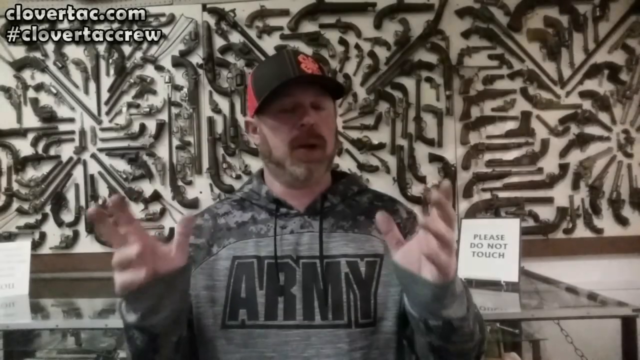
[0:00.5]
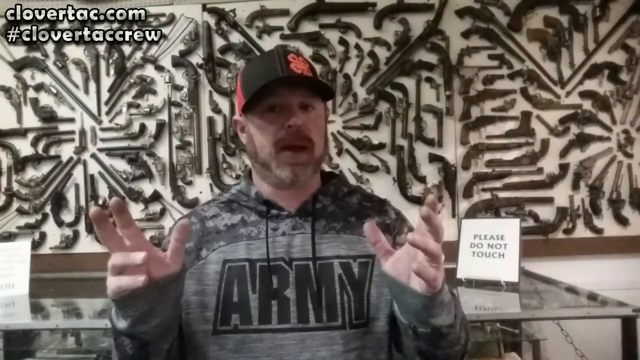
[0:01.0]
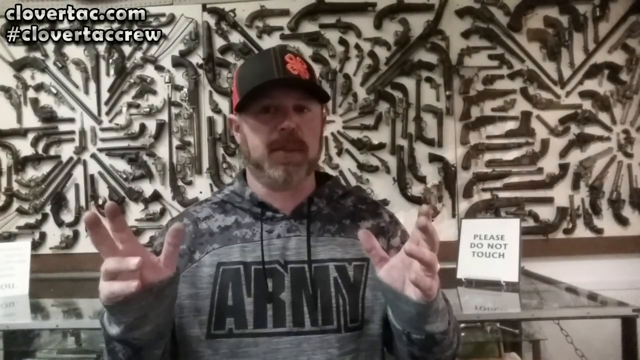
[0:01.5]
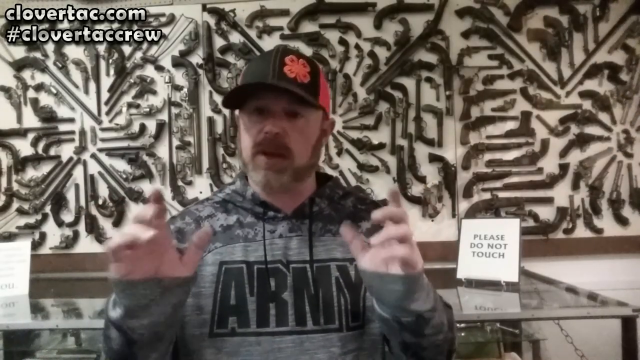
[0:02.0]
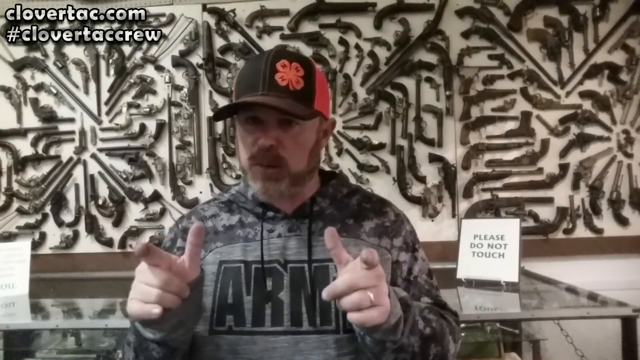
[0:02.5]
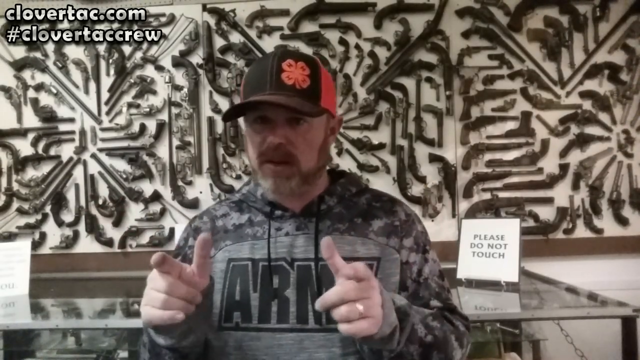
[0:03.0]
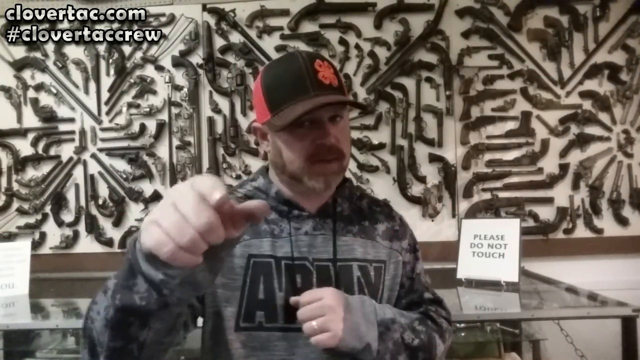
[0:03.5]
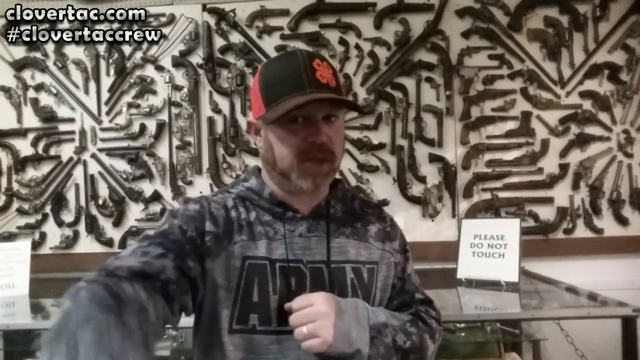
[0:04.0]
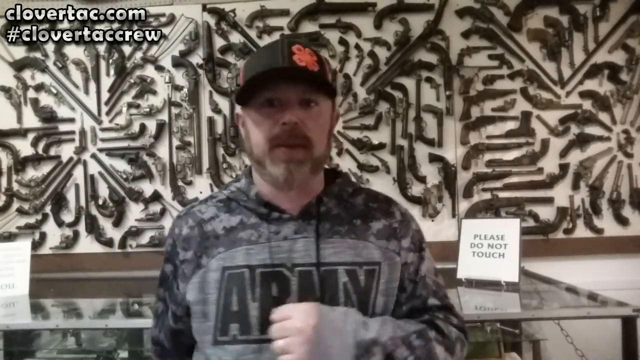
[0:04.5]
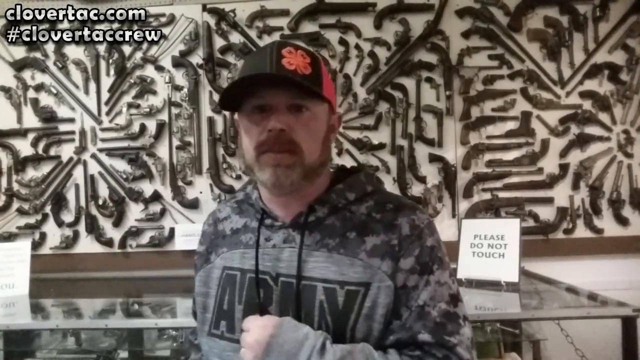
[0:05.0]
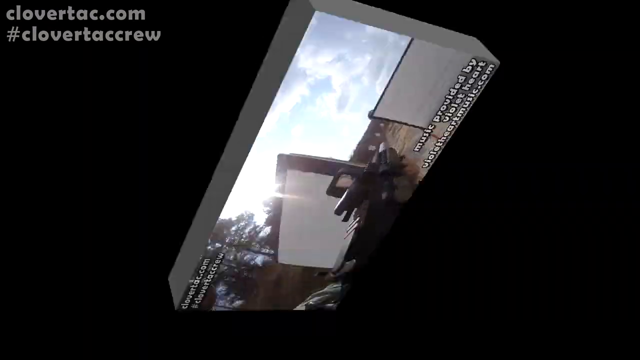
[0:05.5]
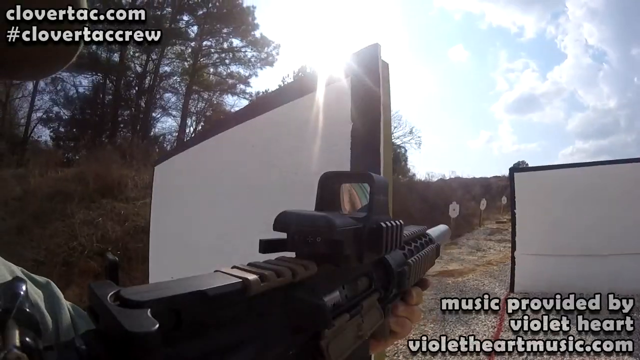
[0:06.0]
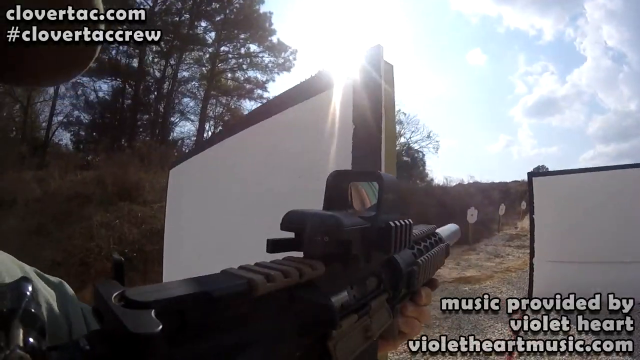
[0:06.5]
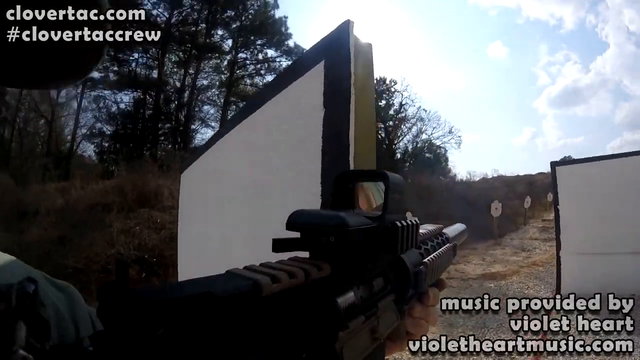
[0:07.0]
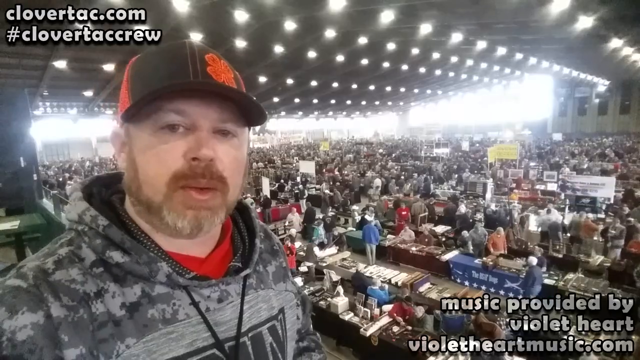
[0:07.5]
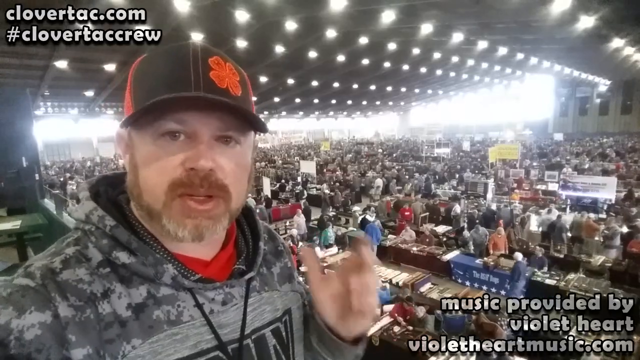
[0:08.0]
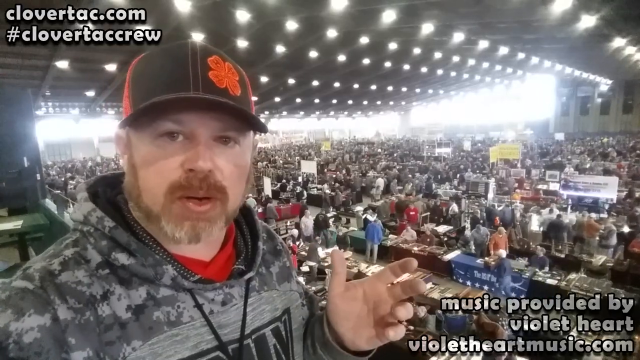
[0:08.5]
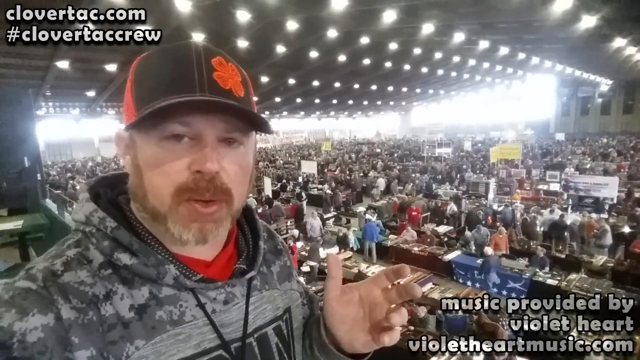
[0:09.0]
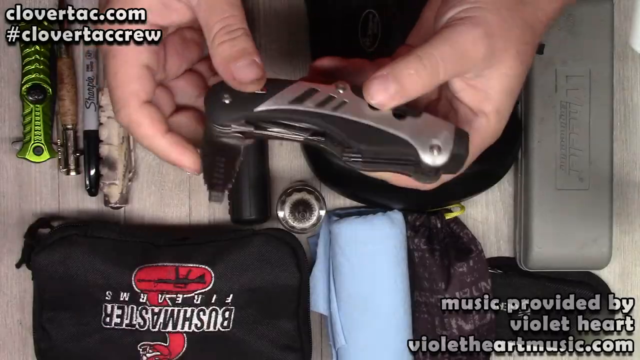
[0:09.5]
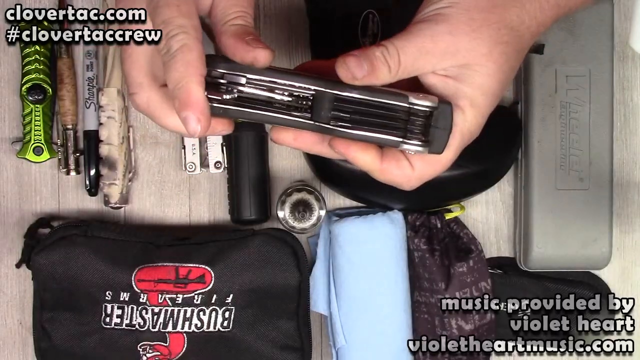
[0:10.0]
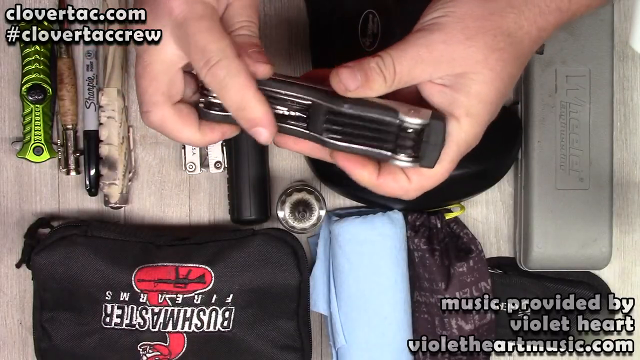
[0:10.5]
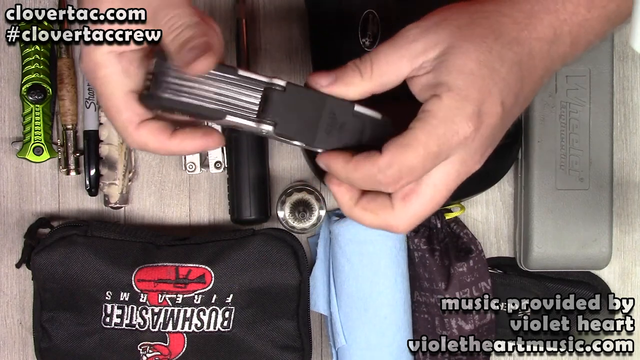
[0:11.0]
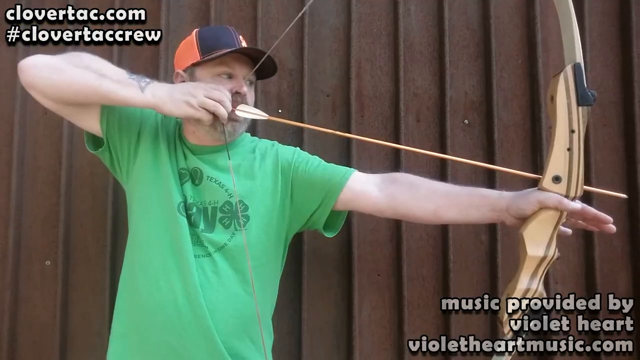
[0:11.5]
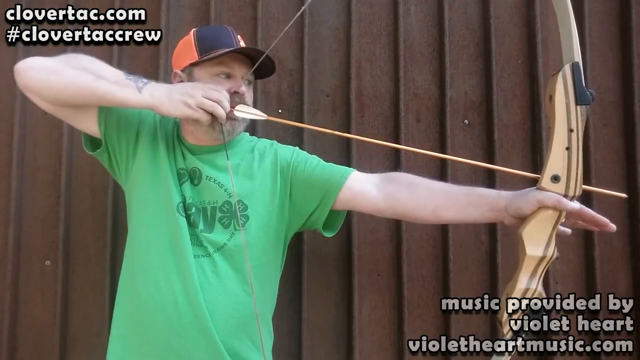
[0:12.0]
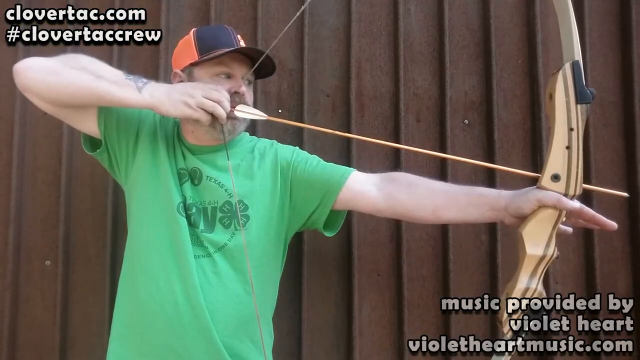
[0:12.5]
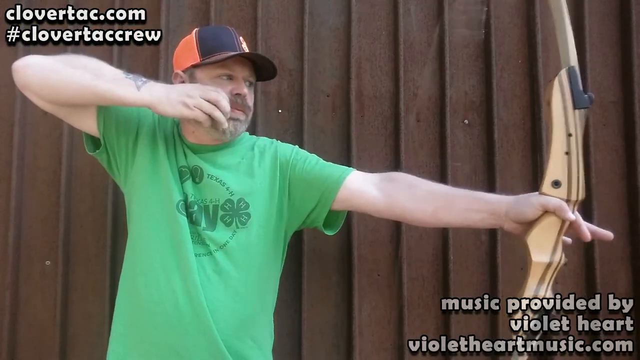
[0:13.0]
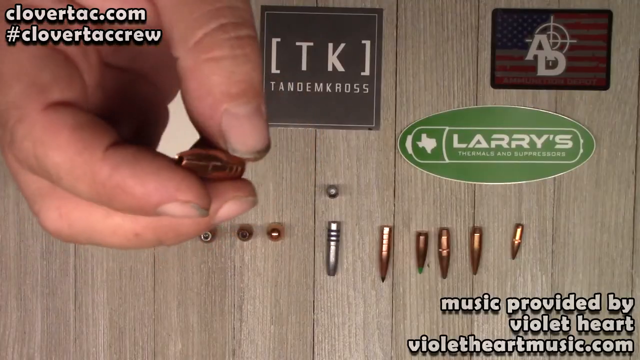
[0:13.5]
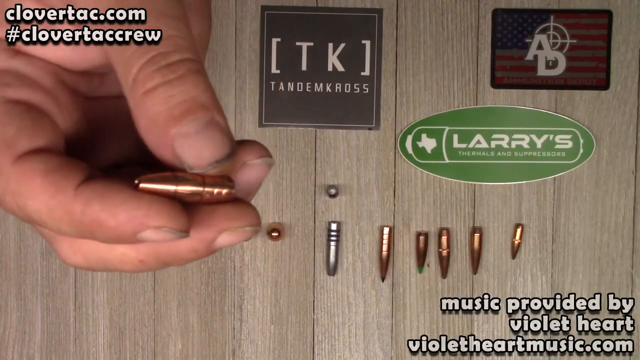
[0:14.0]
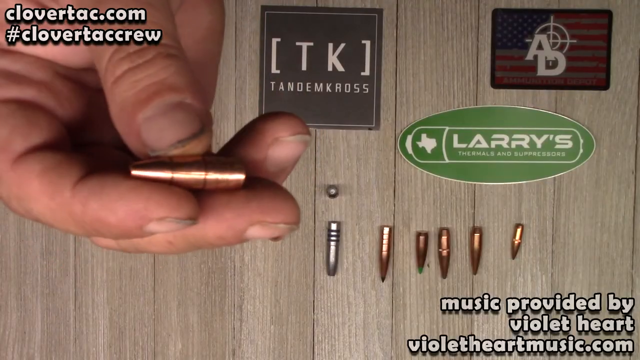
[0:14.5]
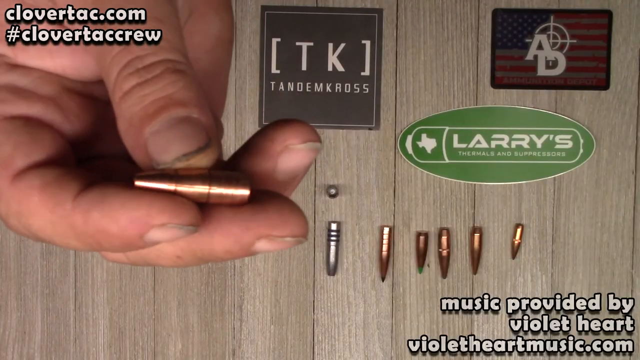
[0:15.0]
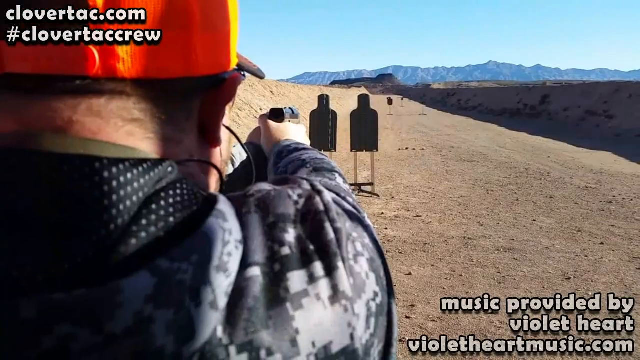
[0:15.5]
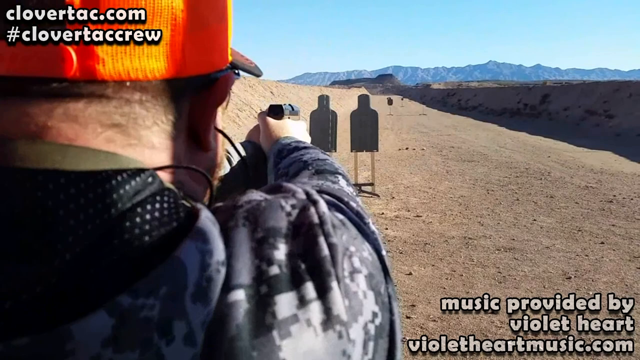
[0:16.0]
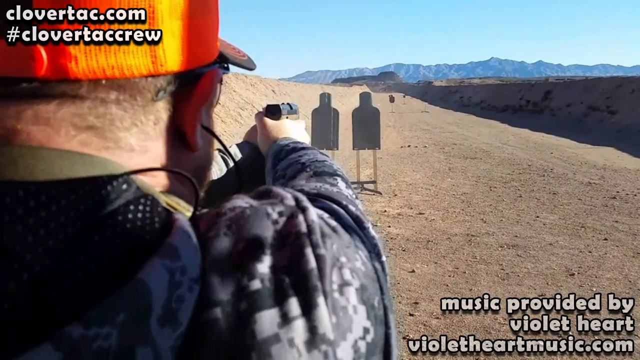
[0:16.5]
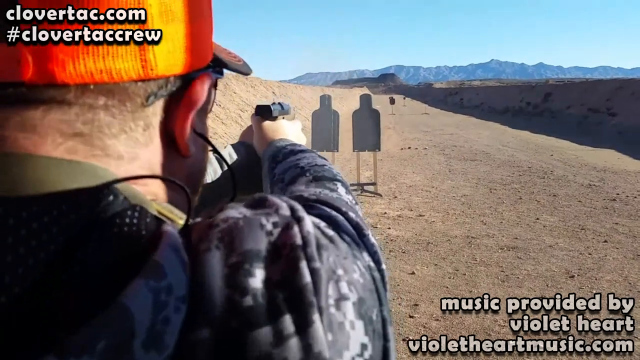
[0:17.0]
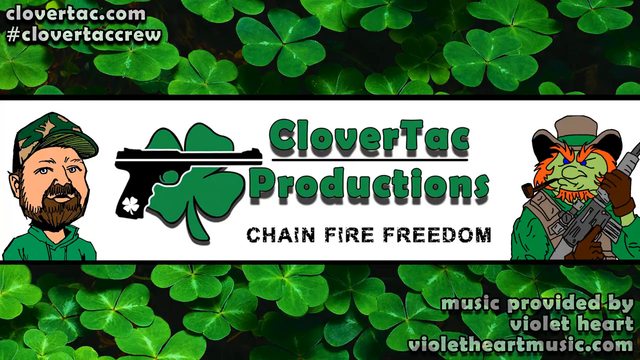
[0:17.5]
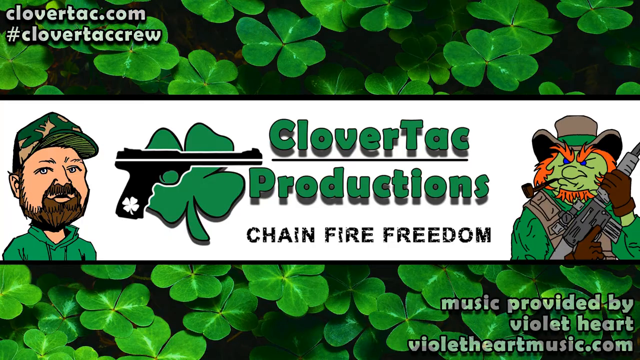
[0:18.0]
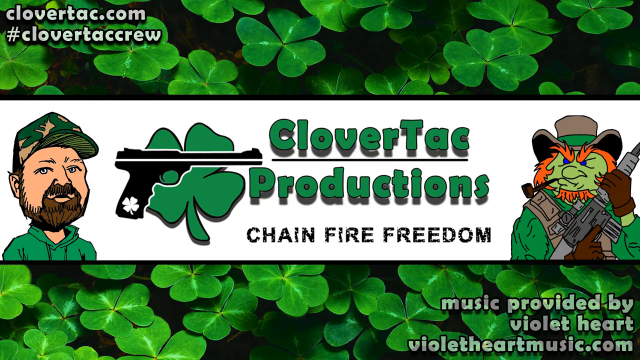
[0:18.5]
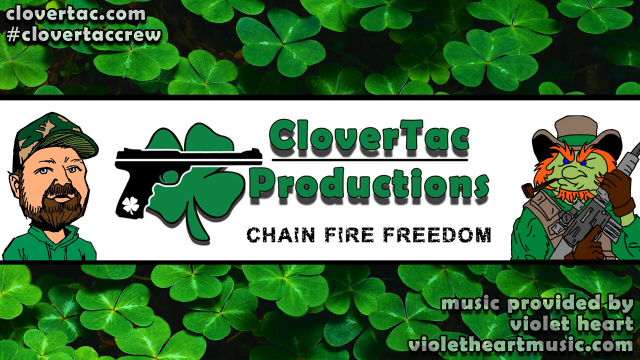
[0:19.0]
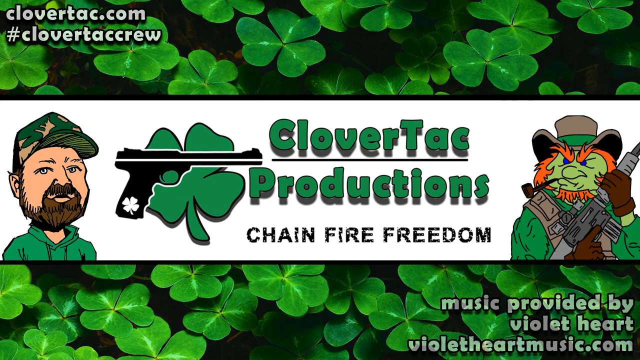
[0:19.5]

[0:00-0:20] A man wears a gray sweatshirt made of a mixture of different shades of gray, with "army" written horizontally across the middle. He appears to be sitting down. At the top left is the text "clovertac.com" with a hashtag, "#clovertac crew," below it. A white sign in the background says "do not touch," and tons of armored weapons and guns are on a wall behind him. He has a black hat with an orange logo on the front and a beard, and he appears middle-aged. He holds both hands out in front of him with his fingers pointing upward, then points at the camera with his index and middle fingers and thumbs. The man leaves the screen, and the footage cuts to a first-person point of view of someone shooting an assault rifle. The man is then positioned outside a large get-together. After going off screen again, the man holds a gold arrow, wearing a green t-shirt, with the arrow wound back. Next, a variety of bullets are on a table, and he has one of the bullets in his hand. The man then shoots a gun at a black target outside. Finally, a designed screen of clovers appears with the text "clovertac productions chain fire freedom."